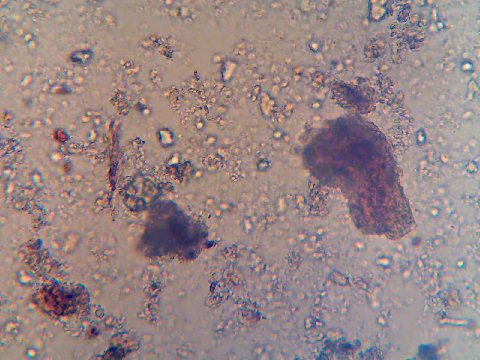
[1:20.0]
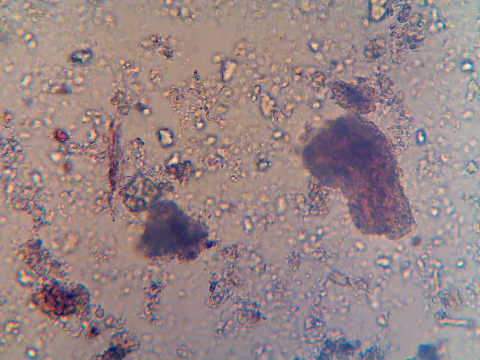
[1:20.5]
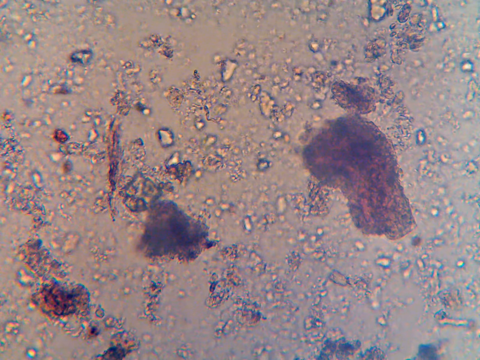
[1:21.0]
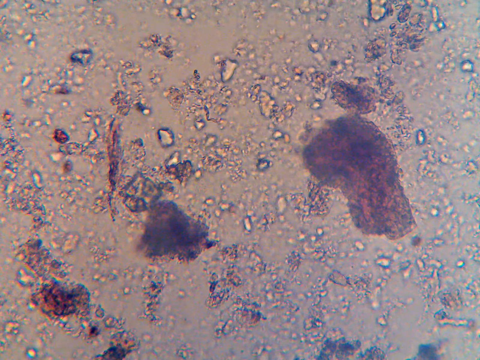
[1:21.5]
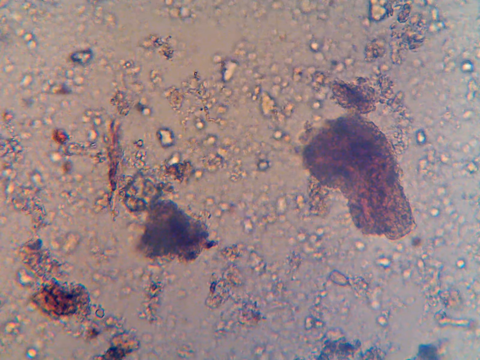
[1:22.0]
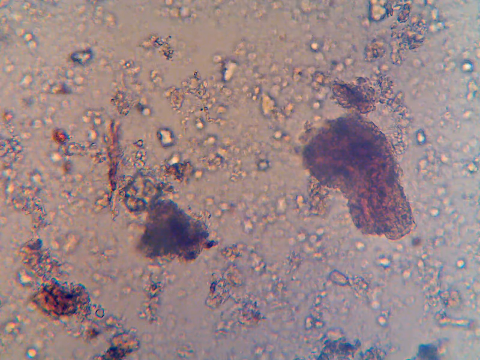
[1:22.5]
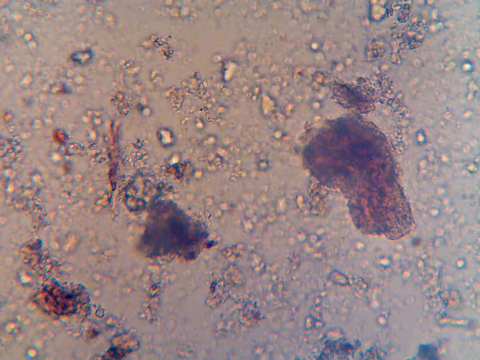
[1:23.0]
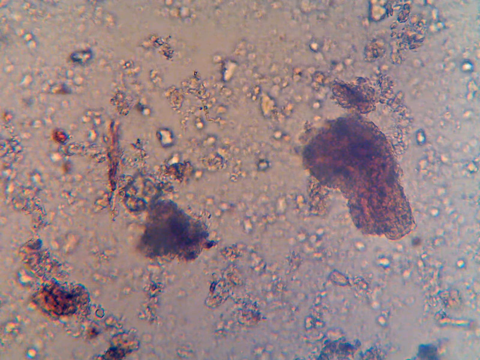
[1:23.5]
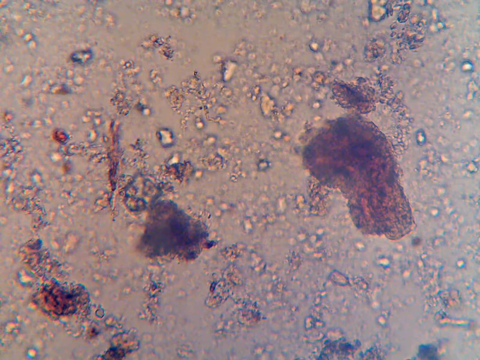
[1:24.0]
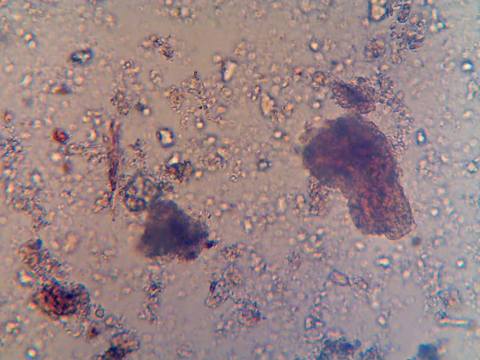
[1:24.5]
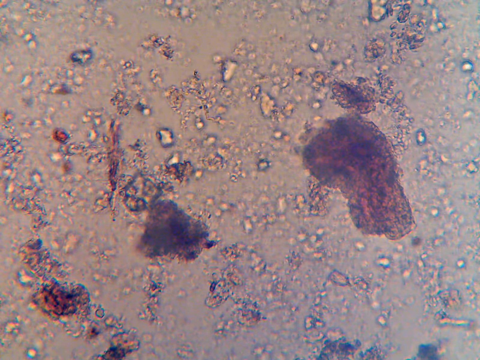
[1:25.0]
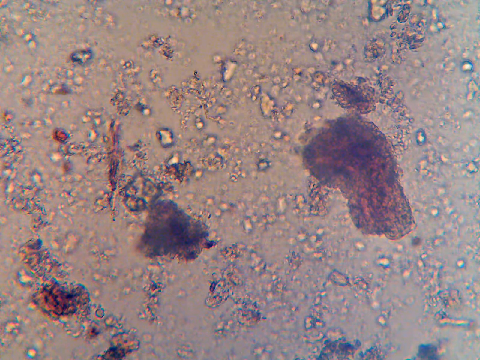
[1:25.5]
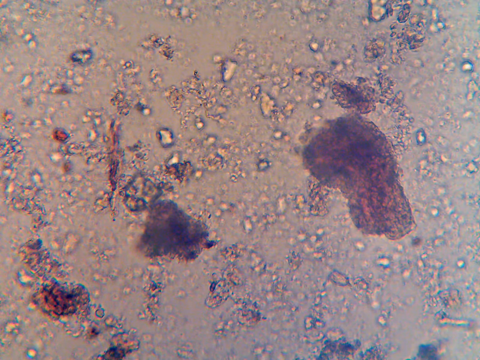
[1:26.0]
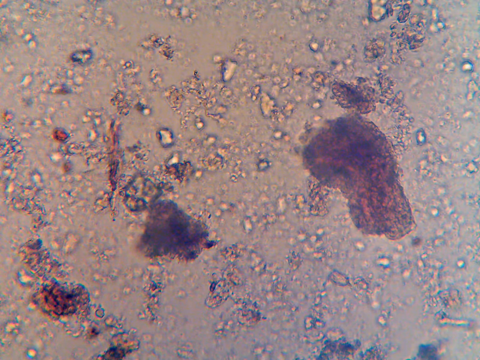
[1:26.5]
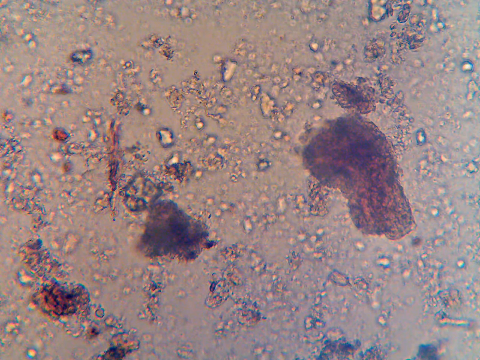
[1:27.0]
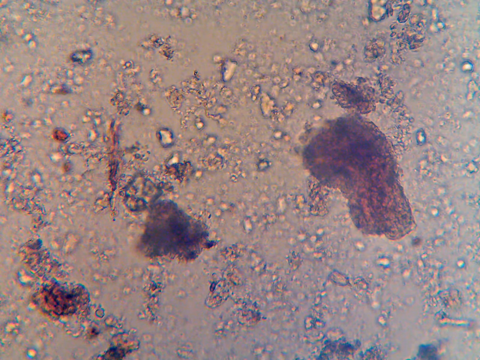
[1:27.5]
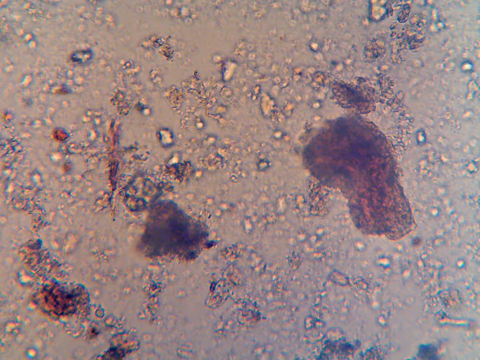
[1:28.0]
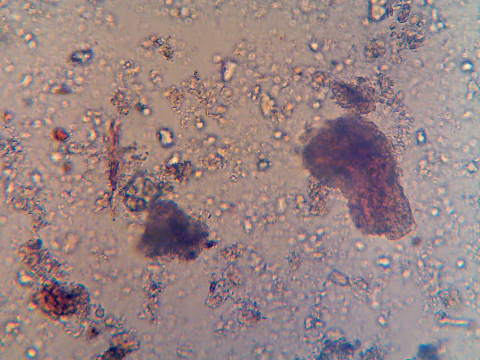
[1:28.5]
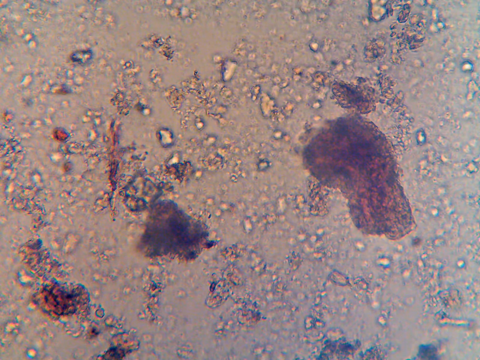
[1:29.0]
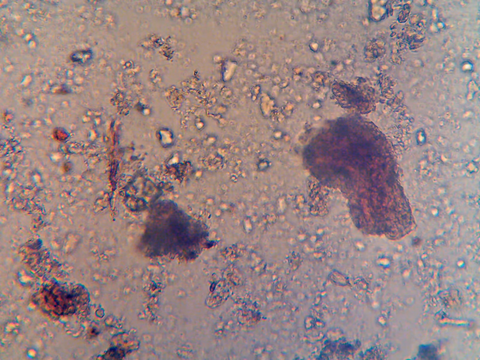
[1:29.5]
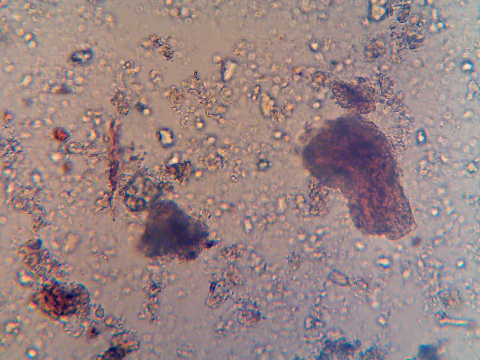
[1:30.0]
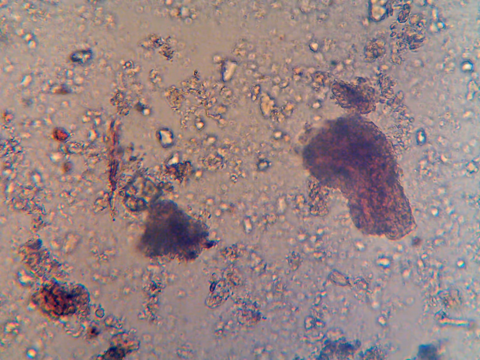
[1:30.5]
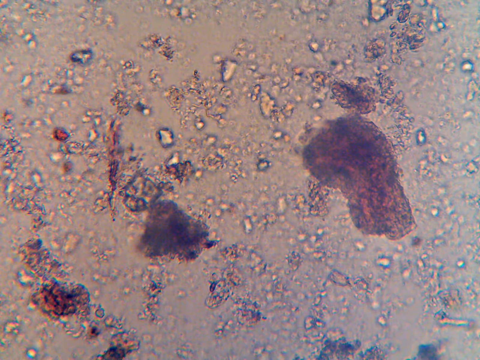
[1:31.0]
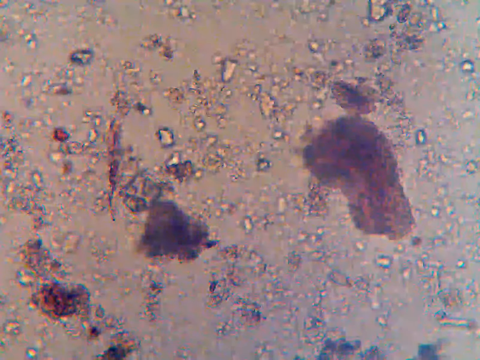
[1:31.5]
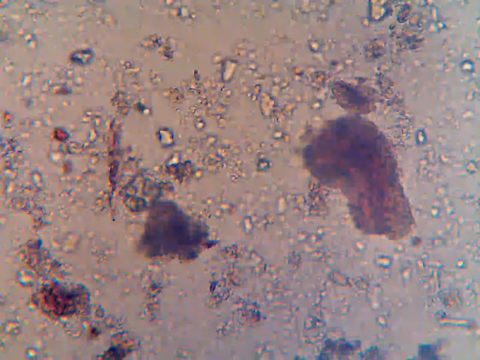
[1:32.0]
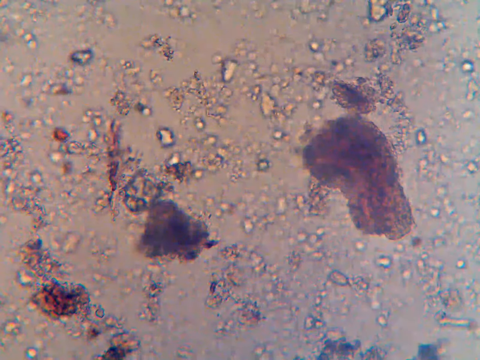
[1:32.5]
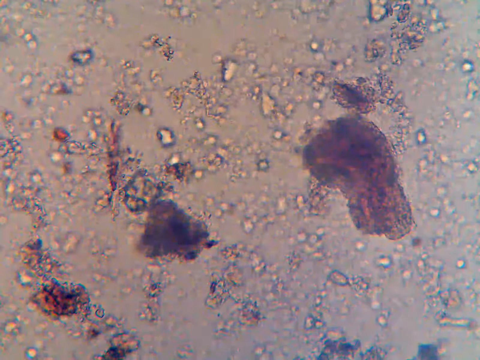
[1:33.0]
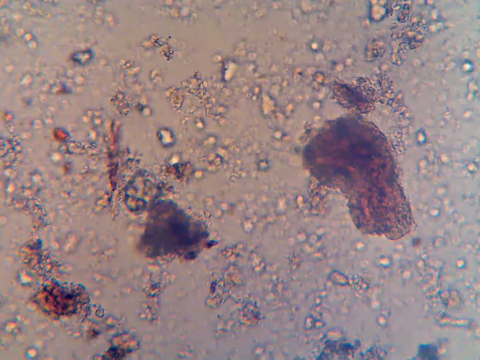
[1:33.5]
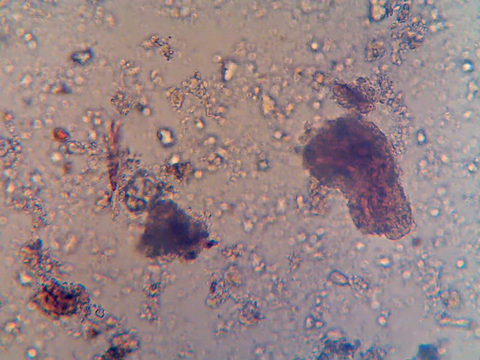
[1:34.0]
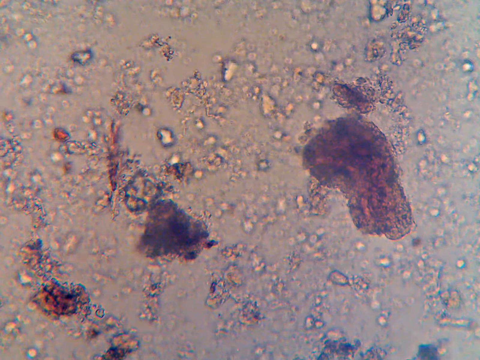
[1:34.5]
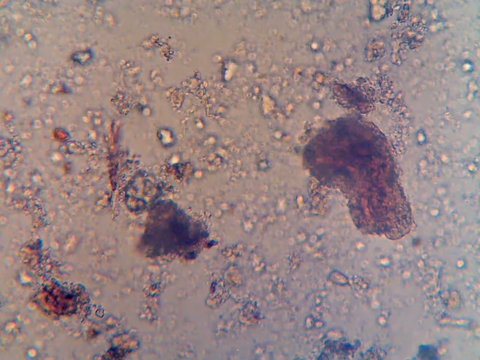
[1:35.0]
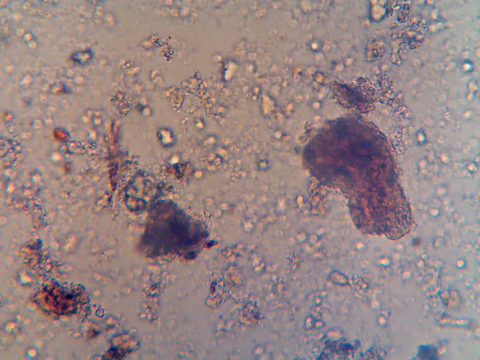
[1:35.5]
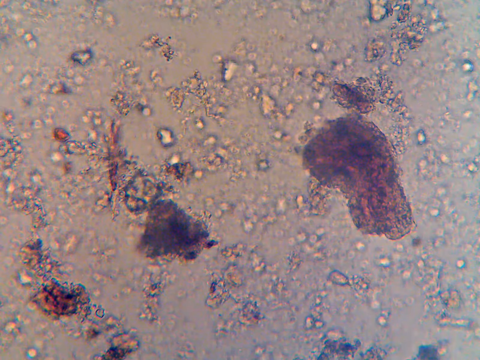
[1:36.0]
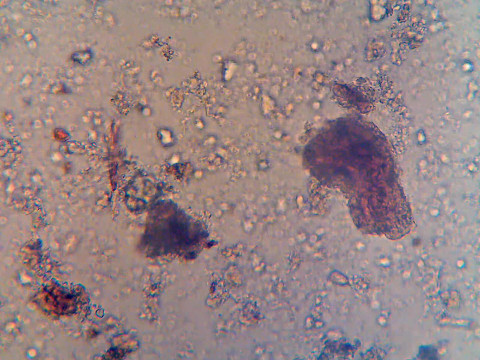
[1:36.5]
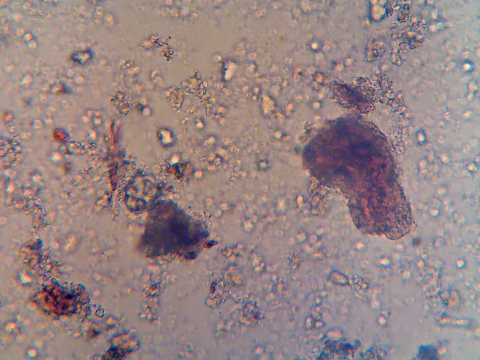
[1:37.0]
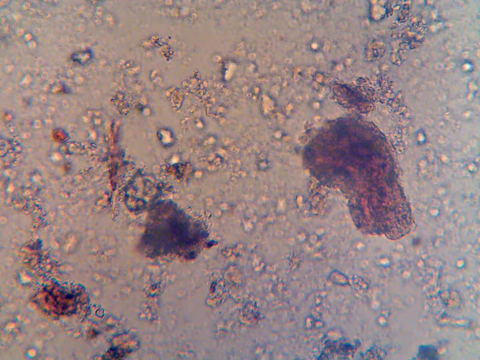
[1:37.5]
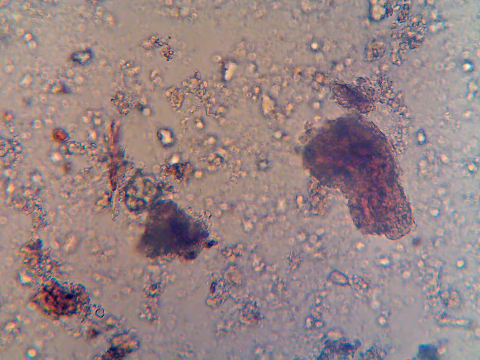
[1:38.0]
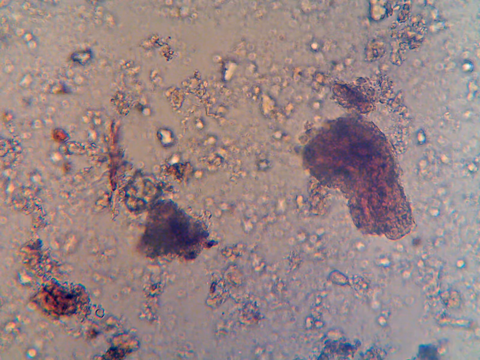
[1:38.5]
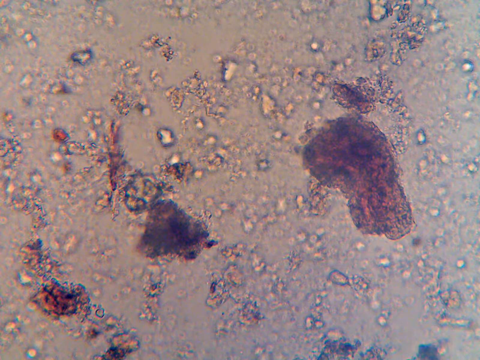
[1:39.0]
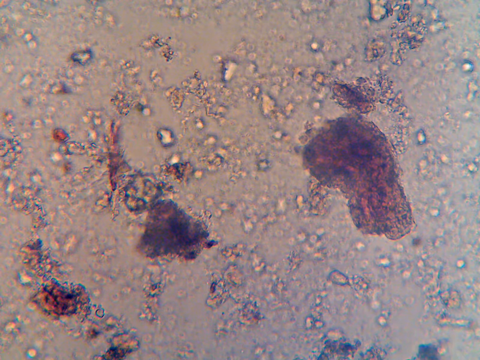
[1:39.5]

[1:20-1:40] What is apparently an electronic microscope view of a sample shows very little change. There is definitely an area of movement, but most of the sample is static: the large areas that stand out do not move, and just one small, slightly blurry area seems to shift location. The brown-beige background is full of round shapes that look like bubbles, not very different in color from the background but enough to stand out. Three larger blobs differ in color: one at the bottom left, one slightly to the right and higher up, and a third significantly further right, at the middle of the screen. These blobs are much darker and very static.